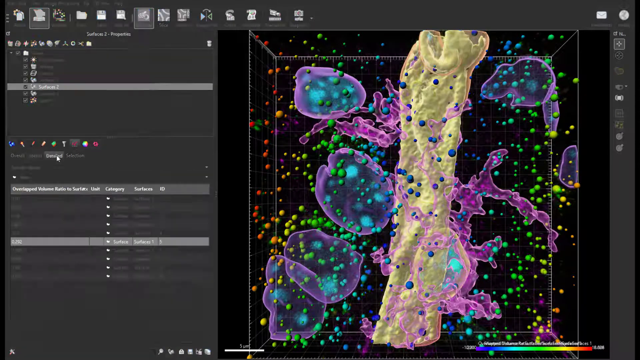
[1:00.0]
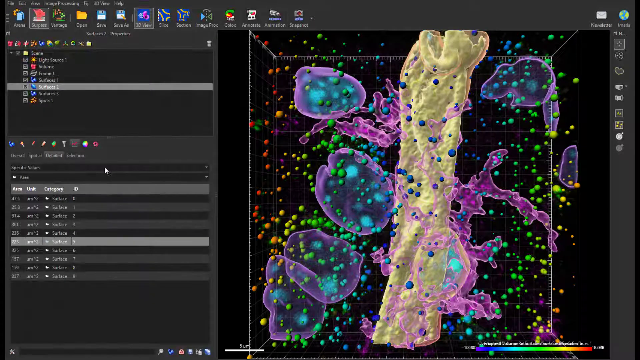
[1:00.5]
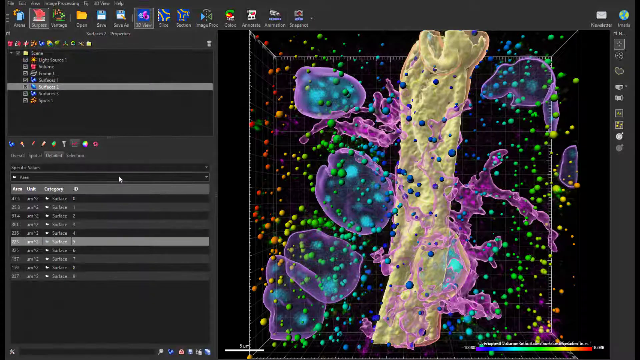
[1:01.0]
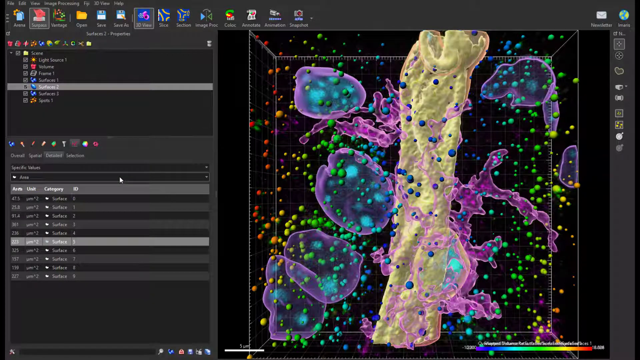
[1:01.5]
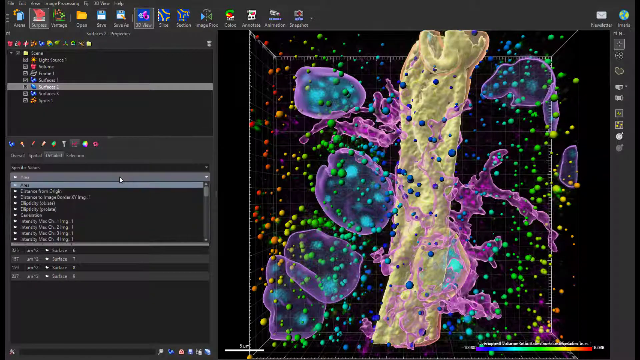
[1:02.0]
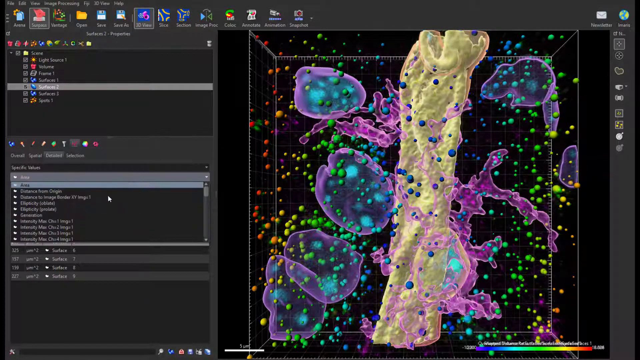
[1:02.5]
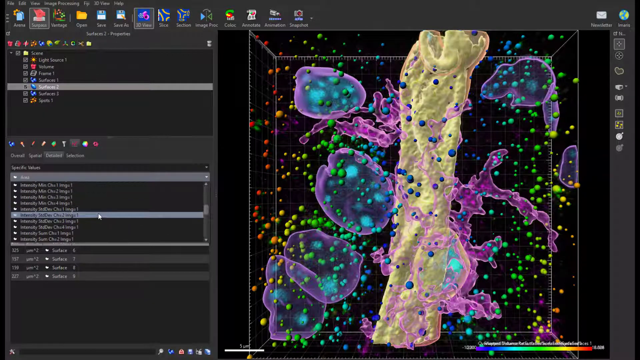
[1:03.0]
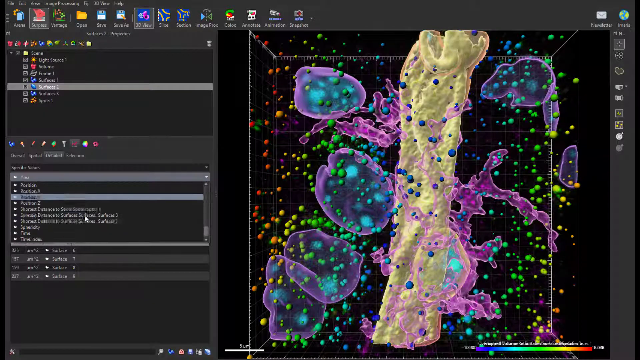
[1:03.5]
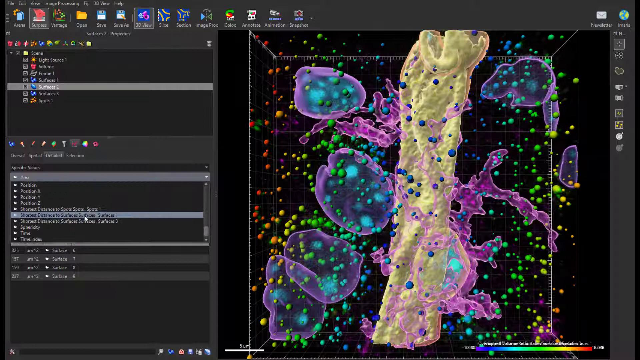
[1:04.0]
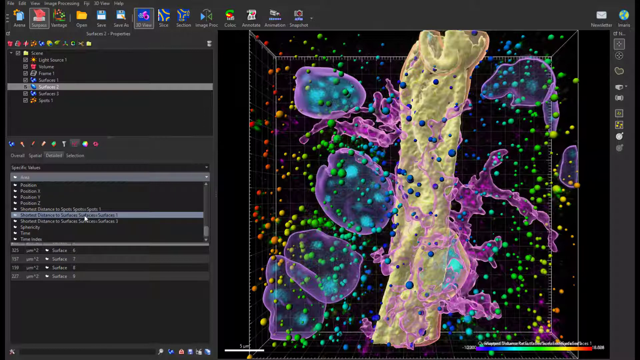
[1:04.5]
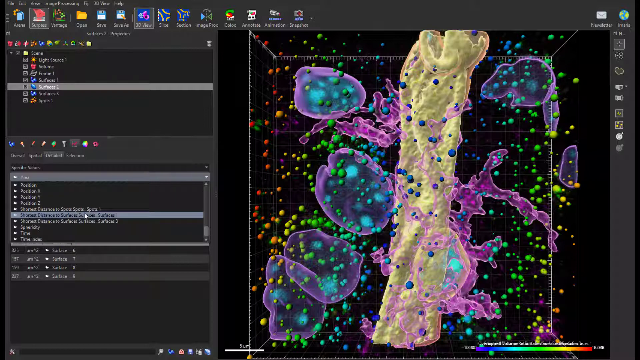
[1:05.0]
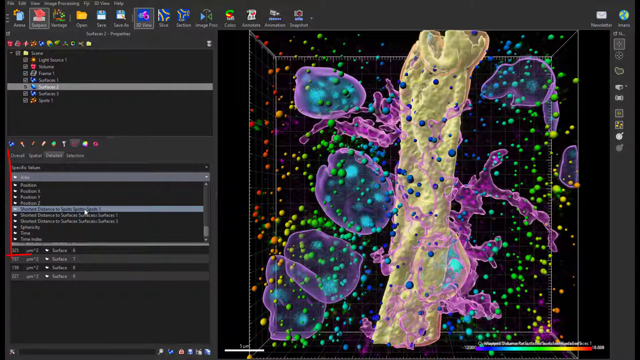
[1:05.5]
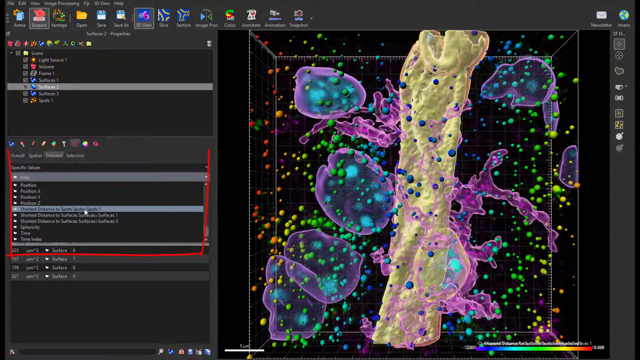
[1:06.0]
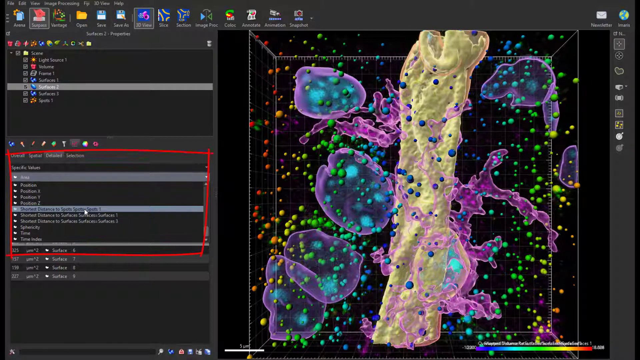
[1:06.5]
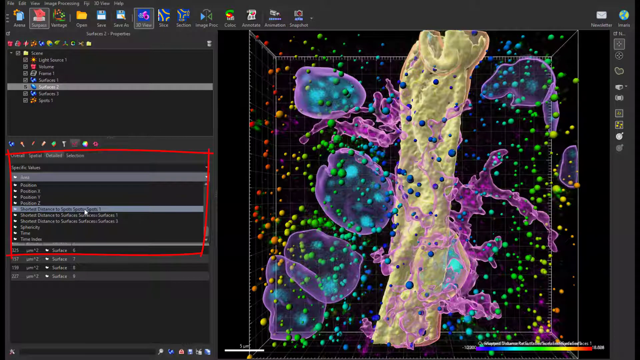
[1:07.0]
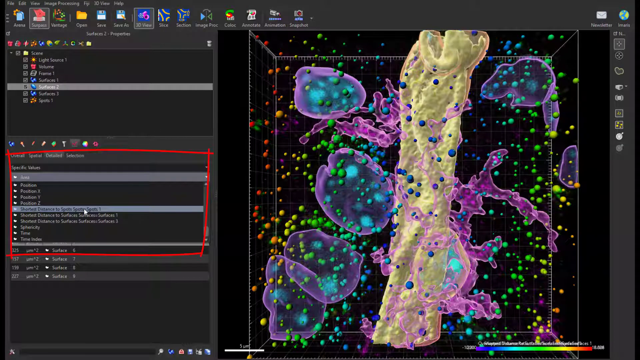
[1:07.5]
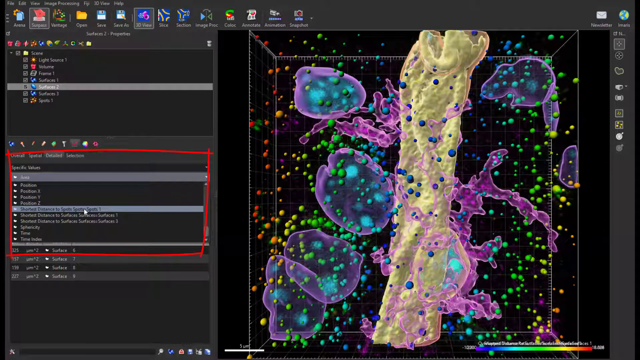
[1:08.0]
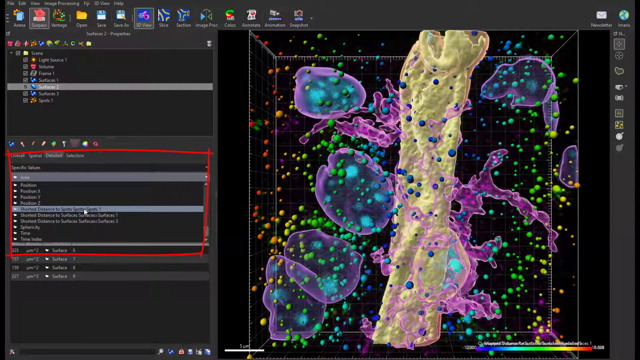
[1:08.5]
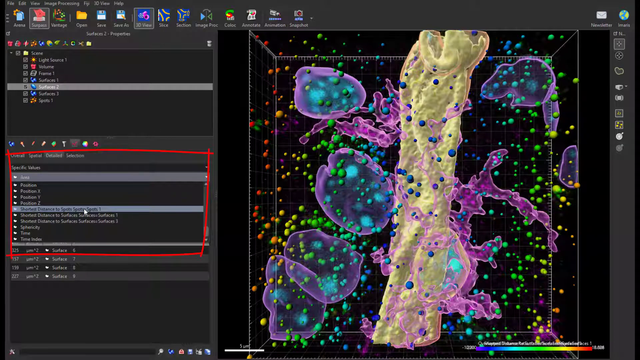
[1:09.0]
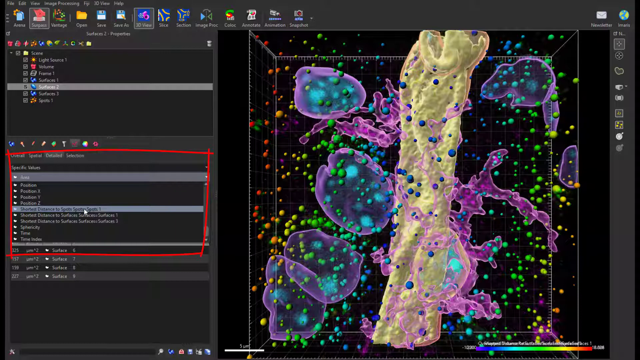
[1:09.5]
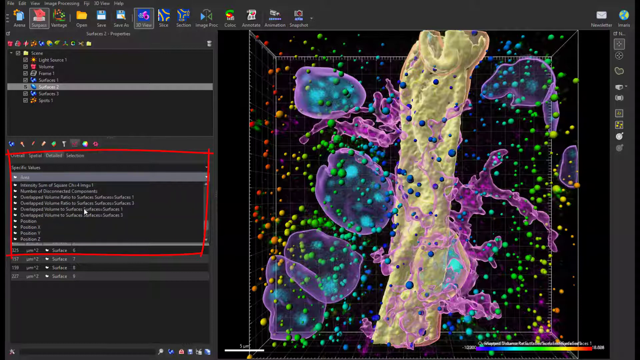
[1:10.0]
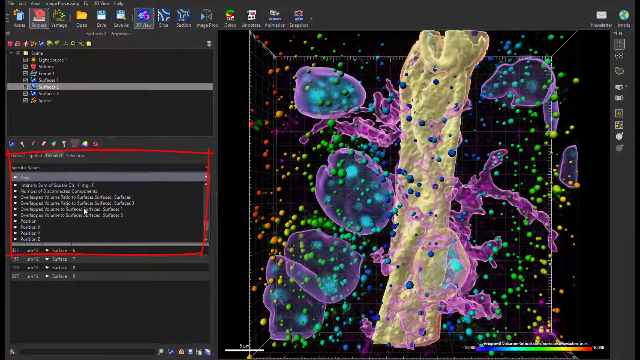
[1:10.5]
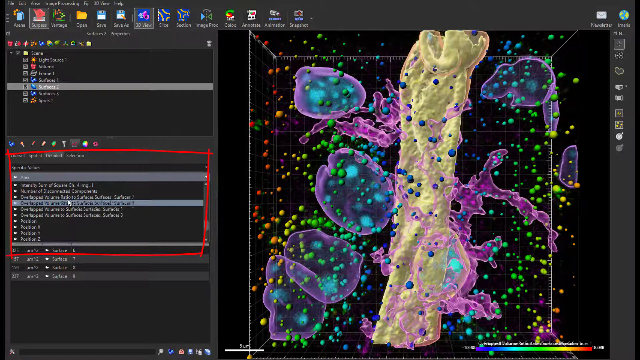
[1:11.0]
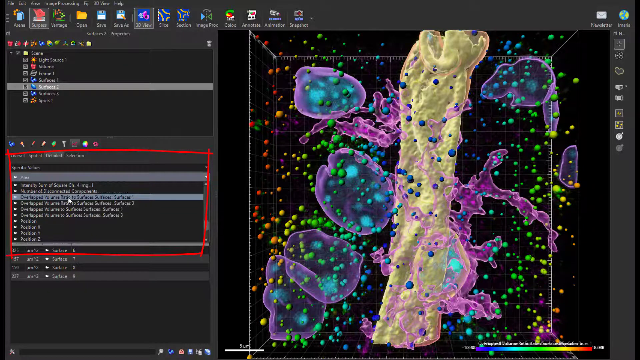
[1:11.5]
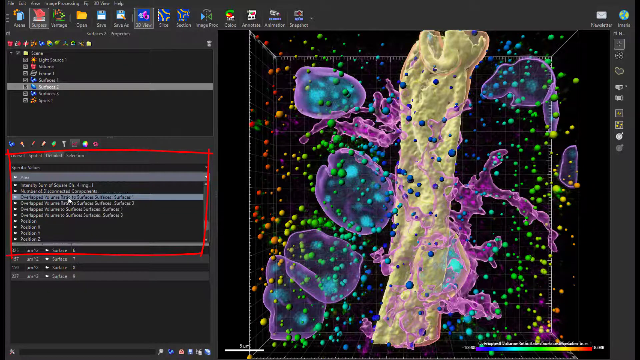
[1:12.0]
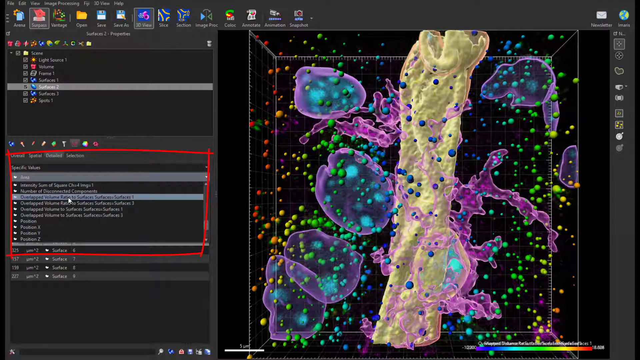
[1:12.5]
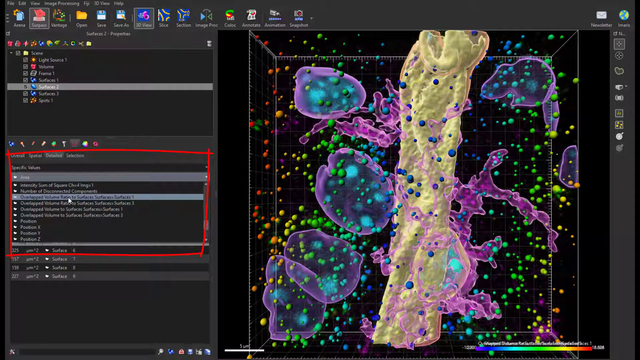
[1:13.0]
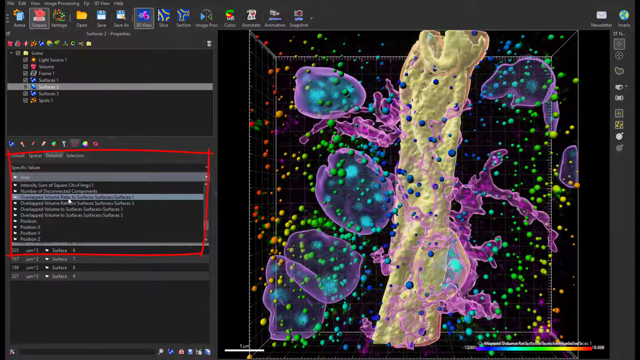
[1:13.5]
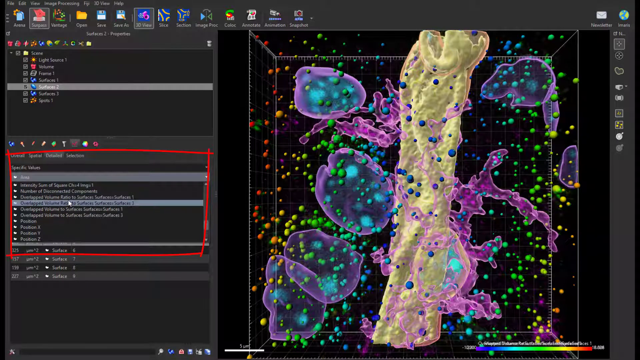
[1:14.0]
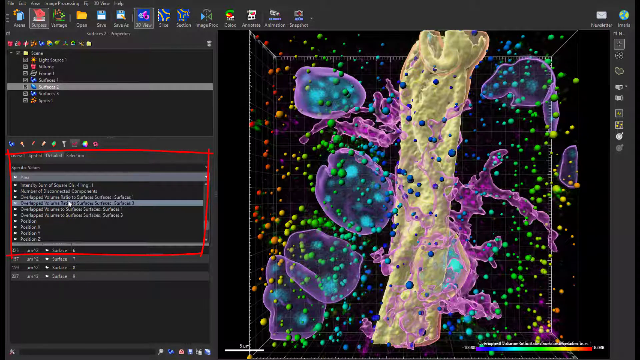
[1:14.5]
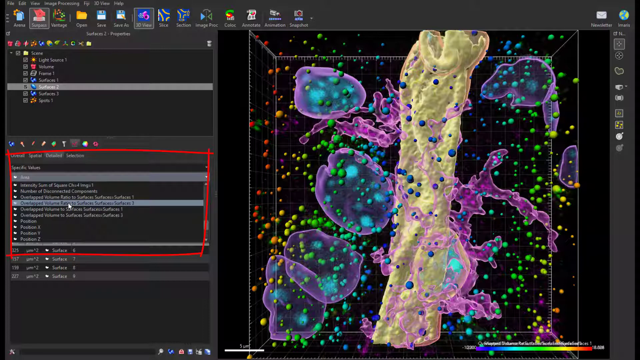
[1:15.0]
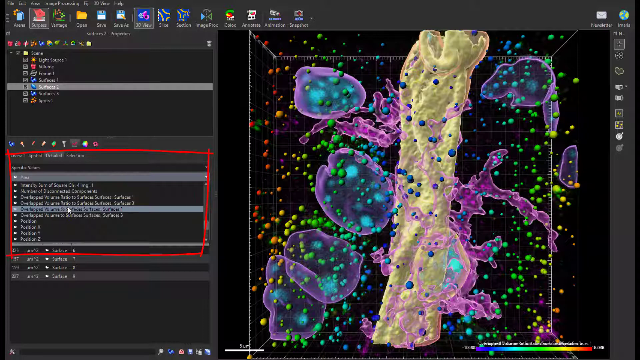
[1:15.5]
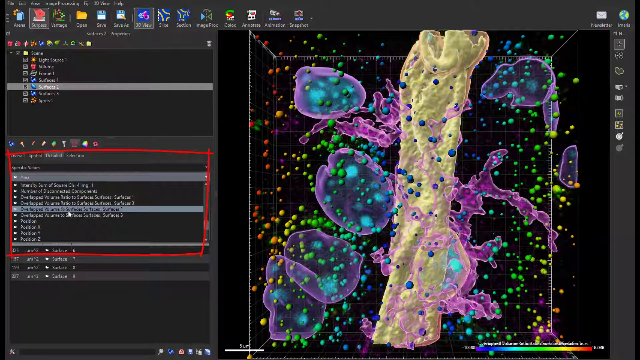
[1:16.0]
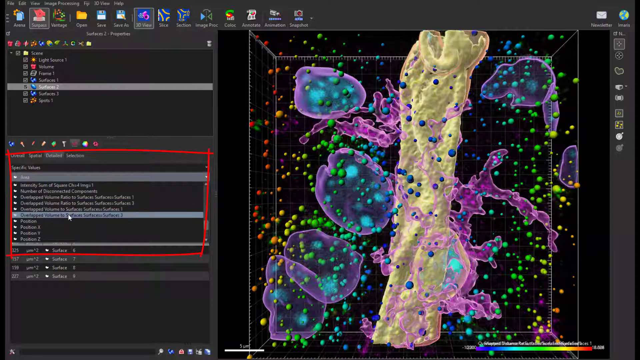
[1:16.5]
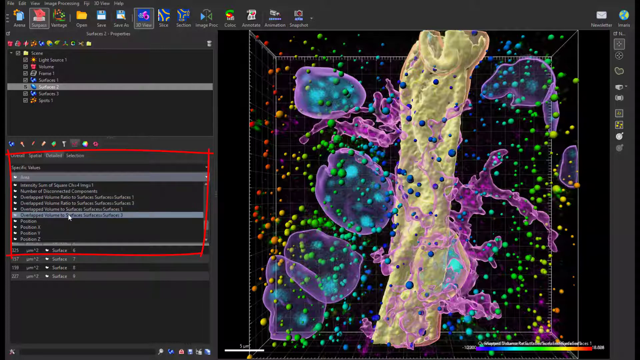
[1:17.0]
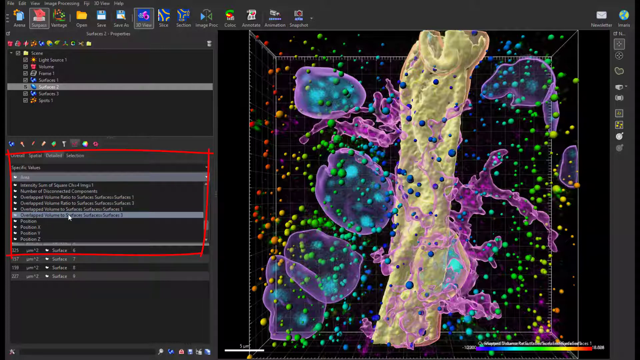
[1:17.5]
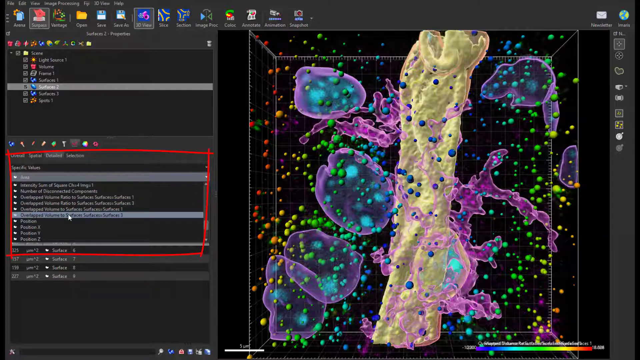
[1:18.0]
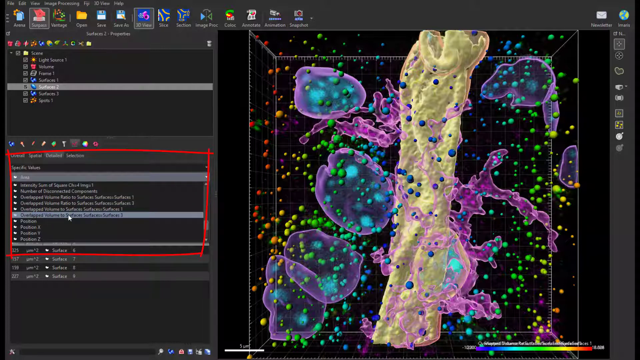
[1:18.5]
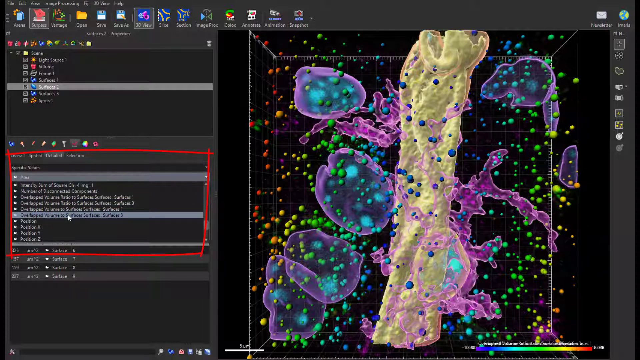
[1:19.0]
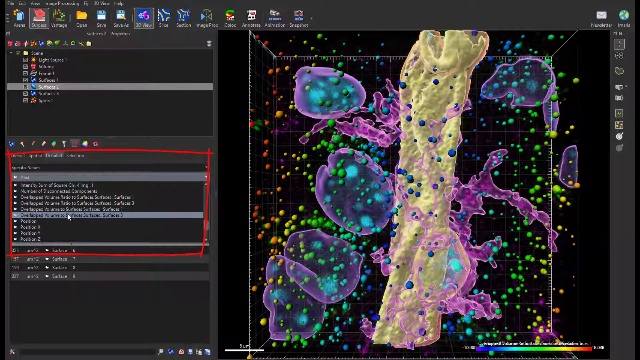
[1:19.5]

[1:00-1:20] The image is already modified, and the white mouse pointer moves around on the left side of the screen. A red rectangle pops up surrounding the top part, where text reads "overall spatial detailed selection." Underneath it says "specific values," followed by "area, intensity, sum of square" and "CH = 4." The pointer is about to click on the highlighted part, which reads "overlap value to surfaces," with what is described as an equal sign and then "surfaces." The first letter of each word is capitalized, including the O in overlap and the V.